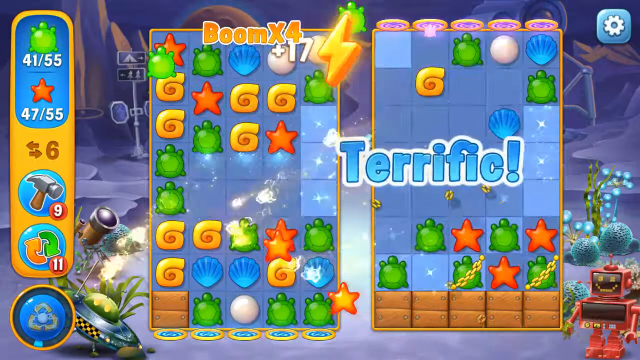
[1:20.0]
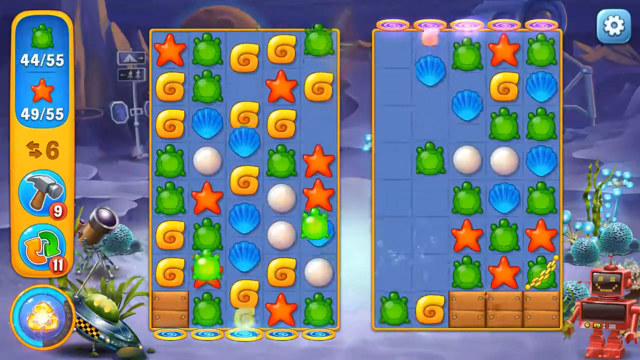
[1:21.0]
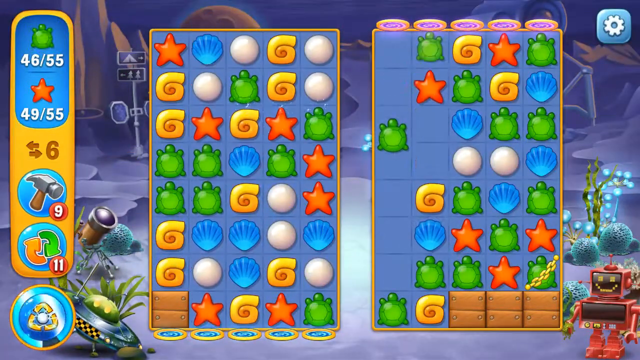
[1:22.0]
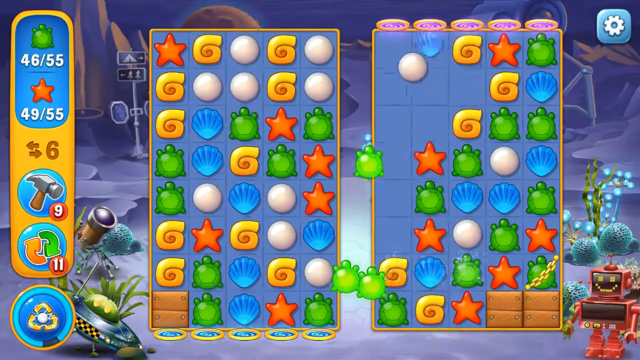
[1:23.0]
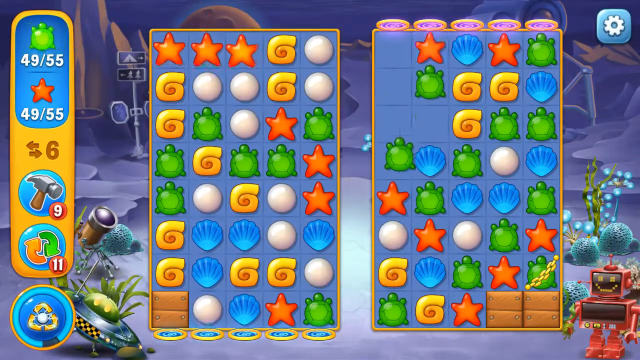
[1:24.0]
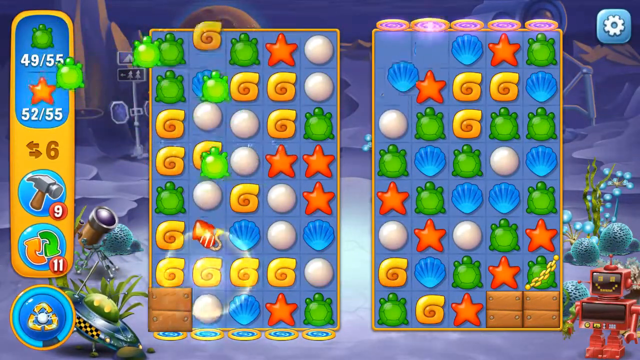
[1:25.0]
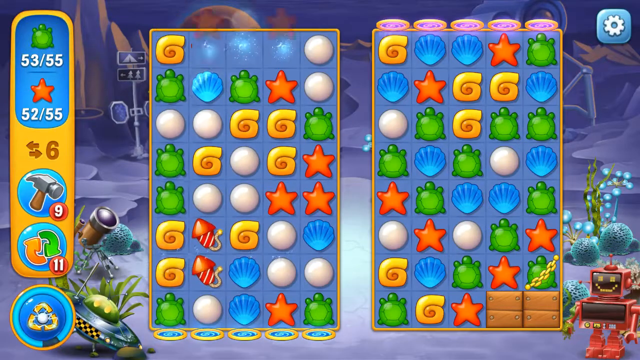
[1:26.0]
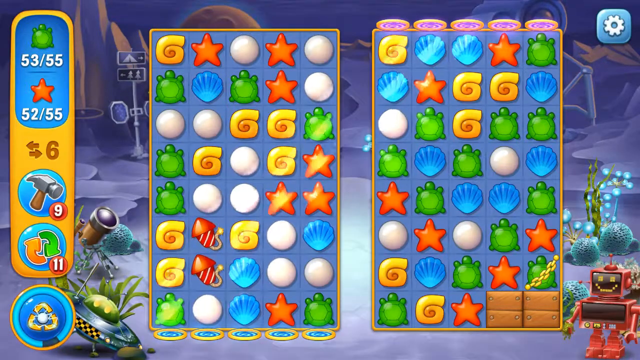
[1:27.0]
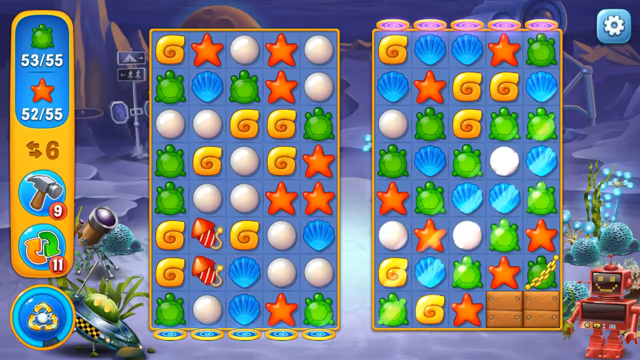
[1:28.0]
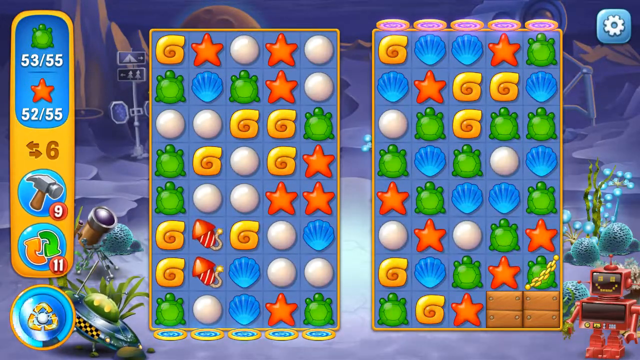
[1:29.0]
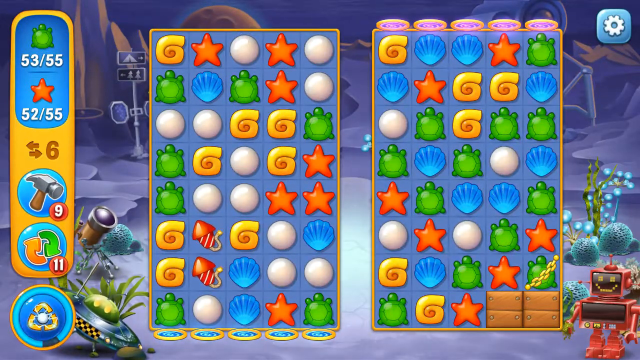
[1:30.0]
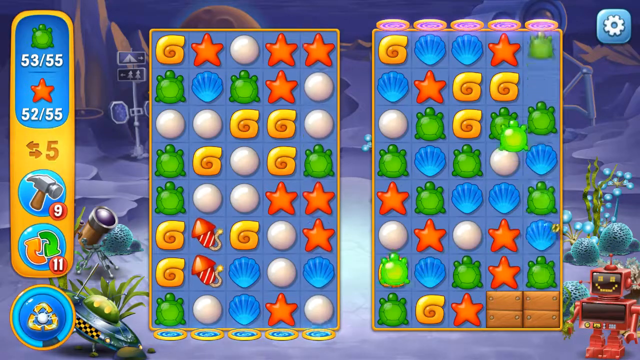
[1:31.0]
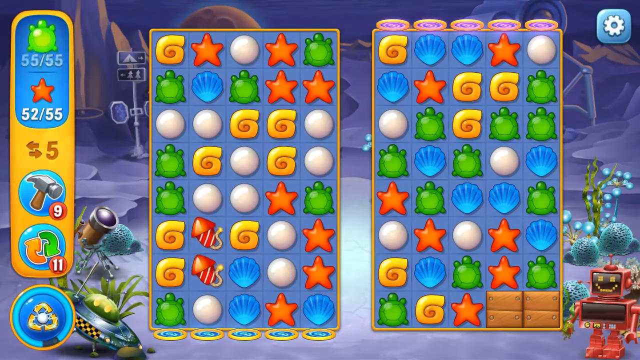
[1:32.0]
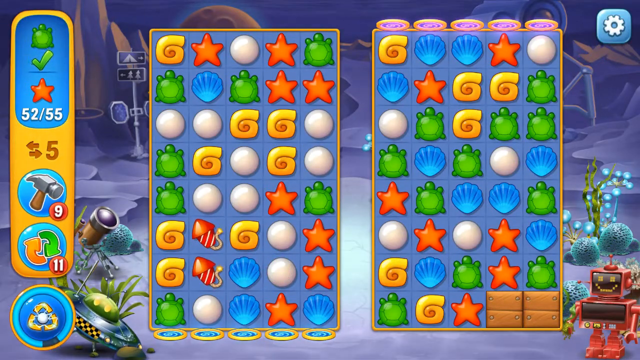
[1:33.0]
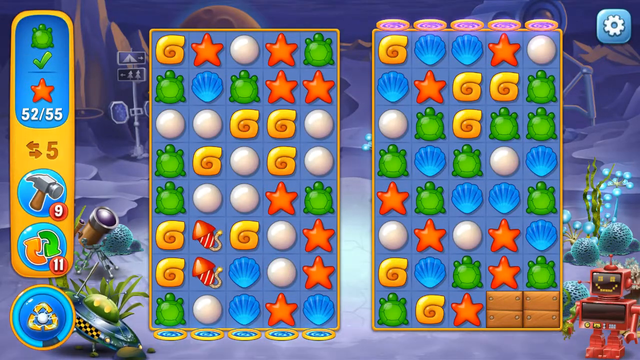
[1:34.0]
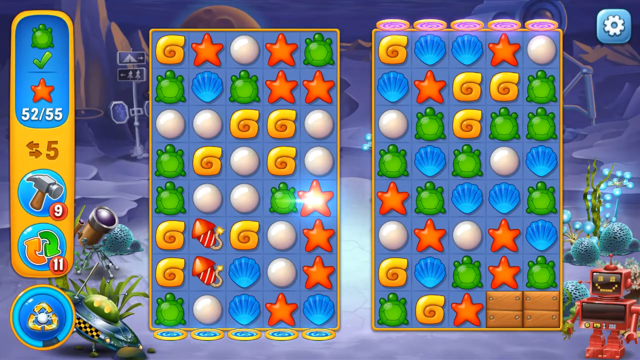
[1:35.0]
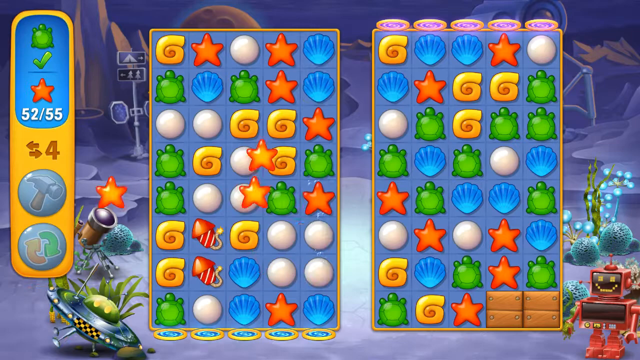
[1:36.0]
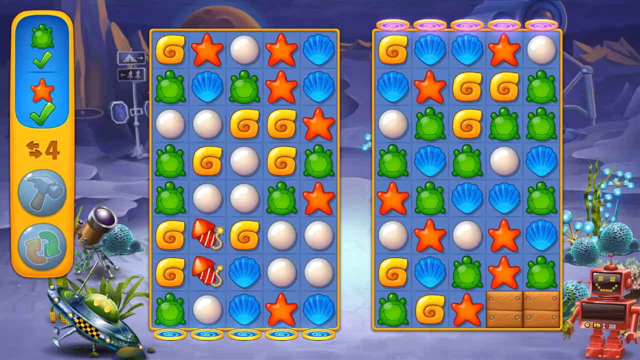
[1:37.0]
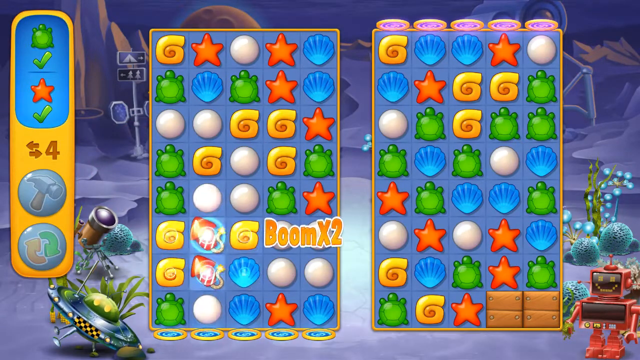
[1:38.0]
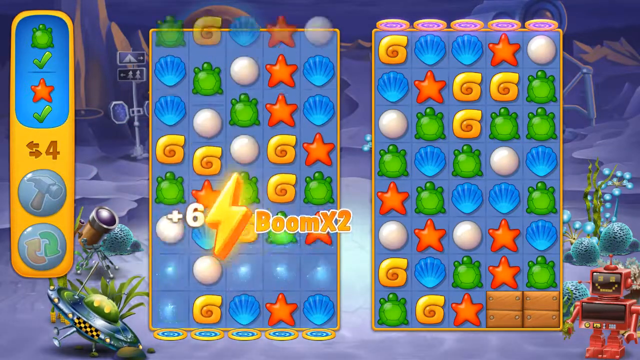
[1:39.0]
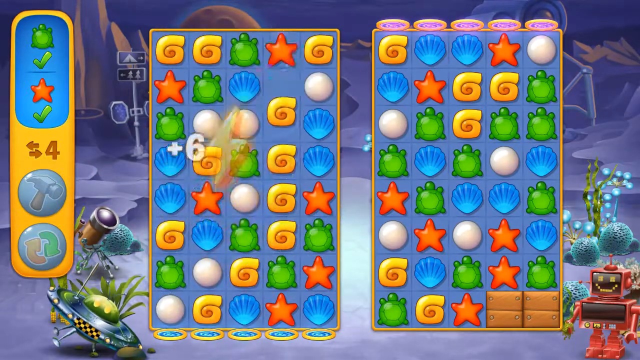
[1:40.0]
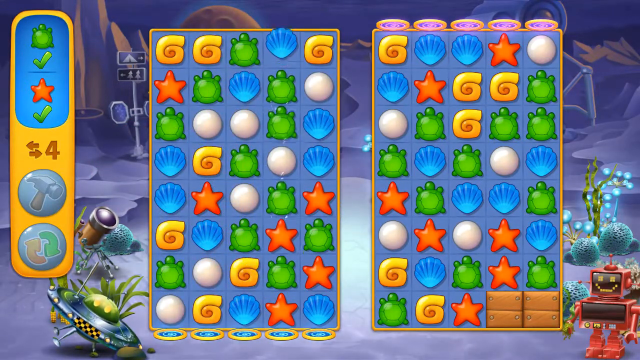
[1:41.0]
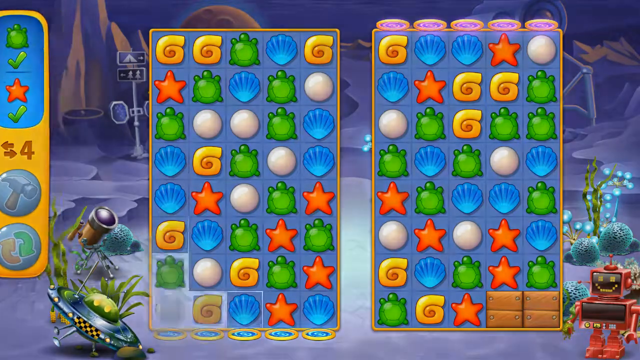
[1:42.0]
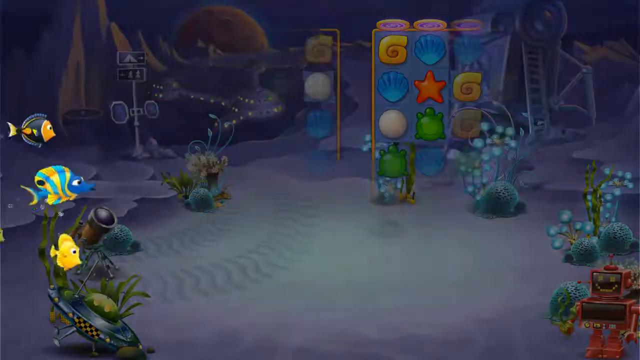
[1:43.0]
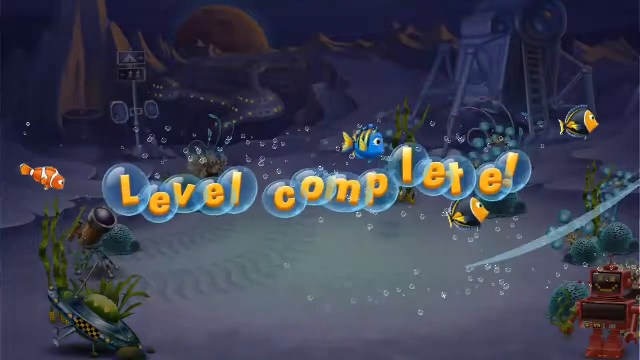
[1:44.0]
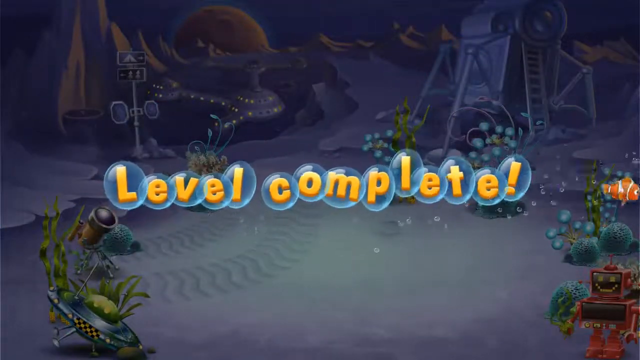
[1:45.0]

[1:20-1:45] The game board has green turtles, starfish, shells and pearls. On the right, some turtles have chains on them, with some blocks not yet broken. Text on the screen says "Boom x4" and "Terrific", and a scoreboard on the left shows 41 out of 55 for turtles and 47 out of 55 for the orange stars, with 6 moves left, 9 hammers and 11 shuffles. The player acquires turtles and stars while making moves, reaching 53 out of 55 turtles and 52 out of 55 stars. They work out their next move and clear the turtles, marked with a green checkmark. Another move gets the stars they need, clearing the board with only 4 moves remaining. Text saying "Level complete" comes up on the screen with some fish swimming around.